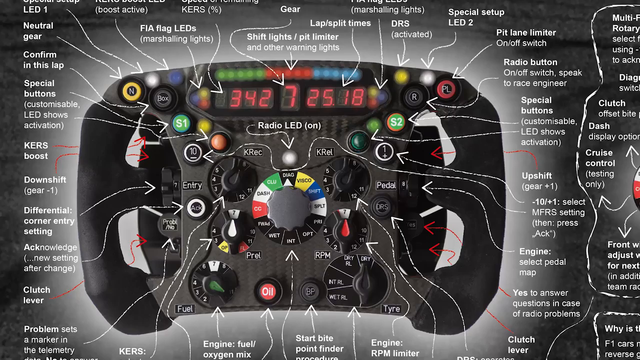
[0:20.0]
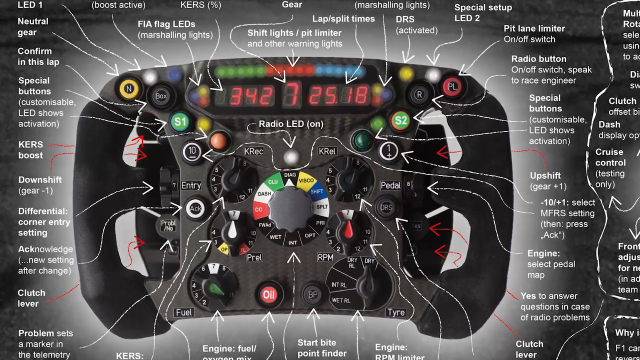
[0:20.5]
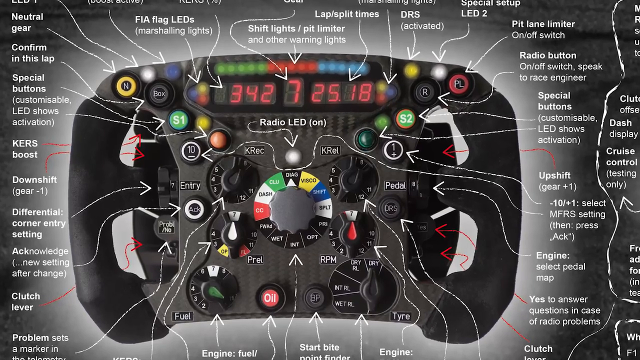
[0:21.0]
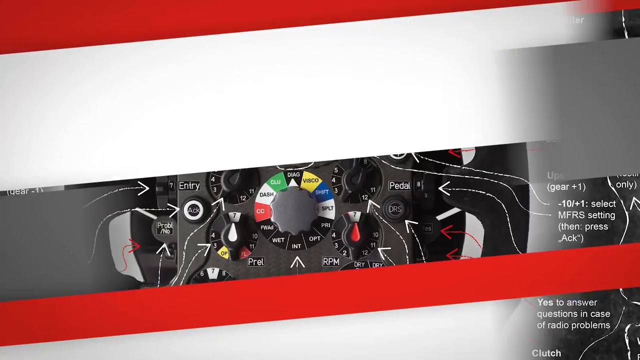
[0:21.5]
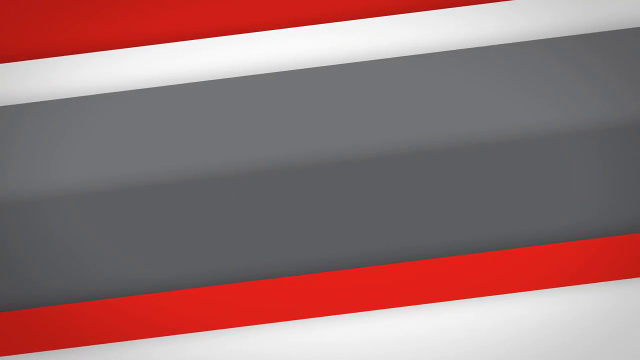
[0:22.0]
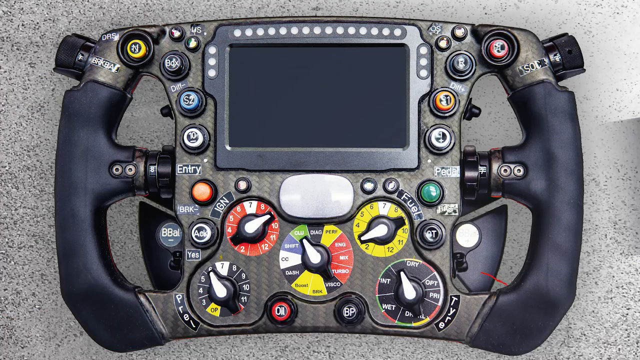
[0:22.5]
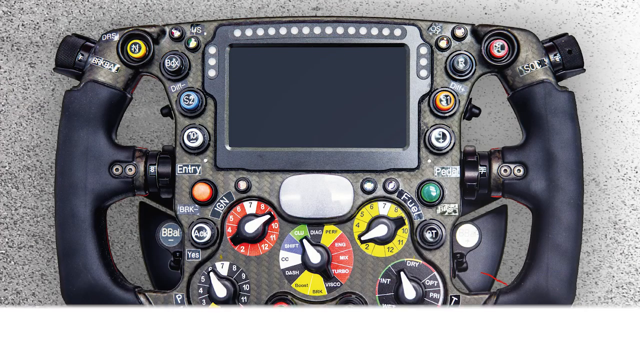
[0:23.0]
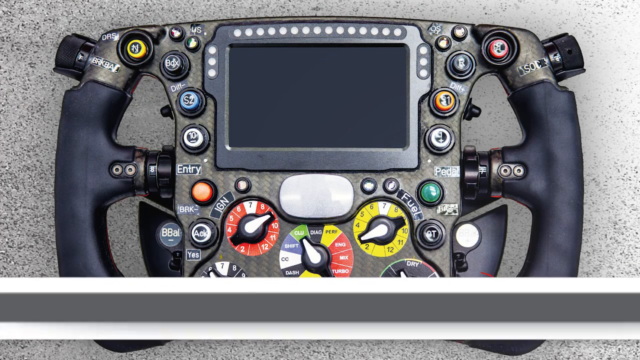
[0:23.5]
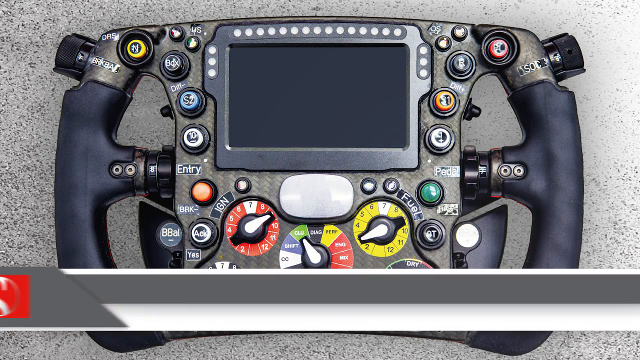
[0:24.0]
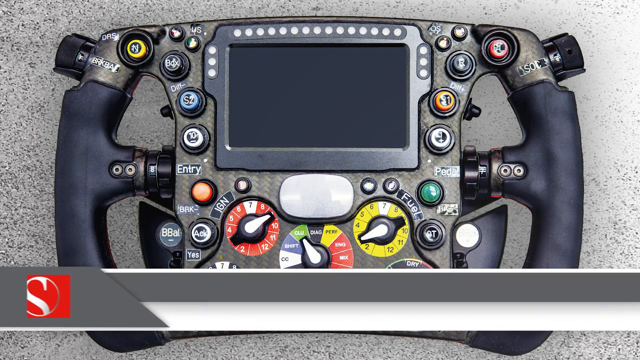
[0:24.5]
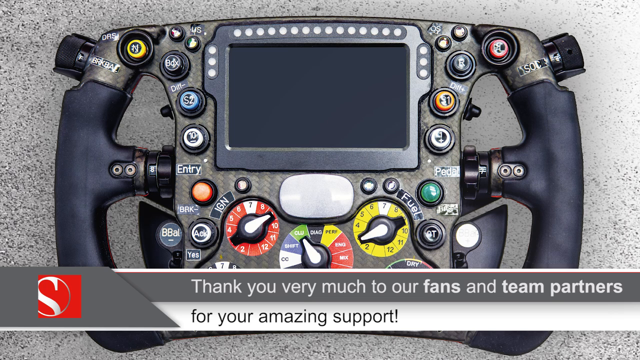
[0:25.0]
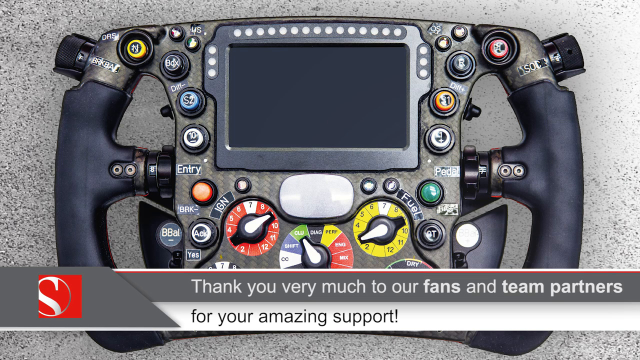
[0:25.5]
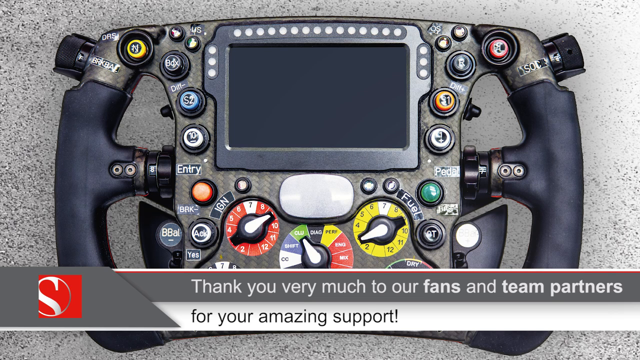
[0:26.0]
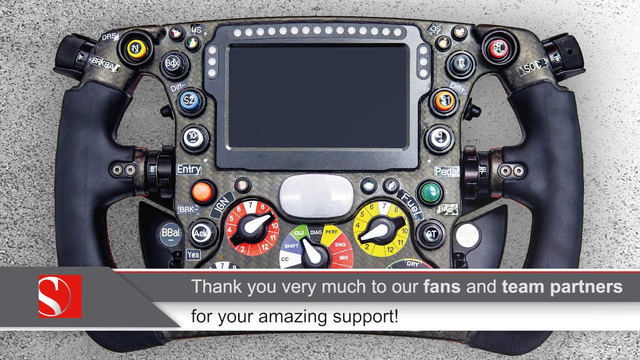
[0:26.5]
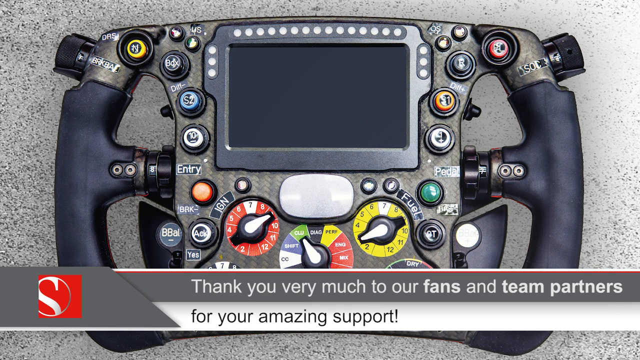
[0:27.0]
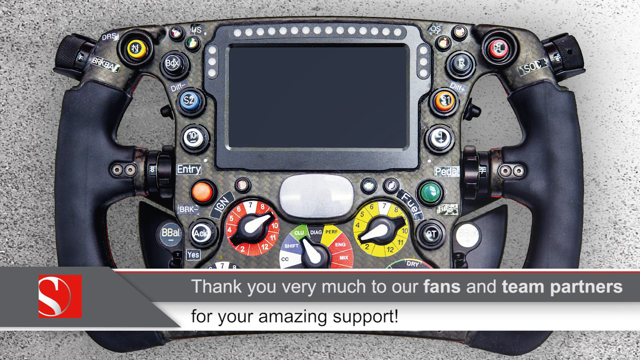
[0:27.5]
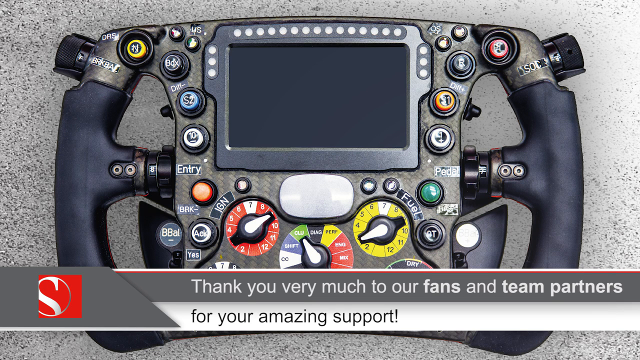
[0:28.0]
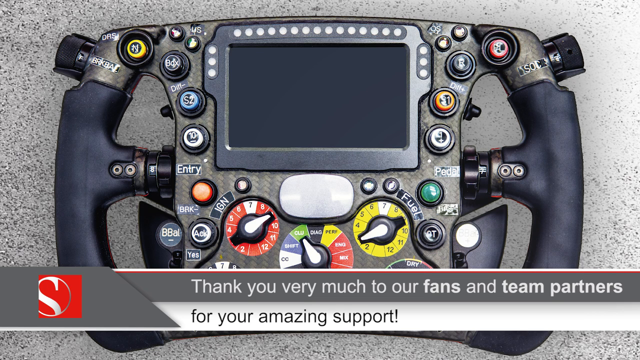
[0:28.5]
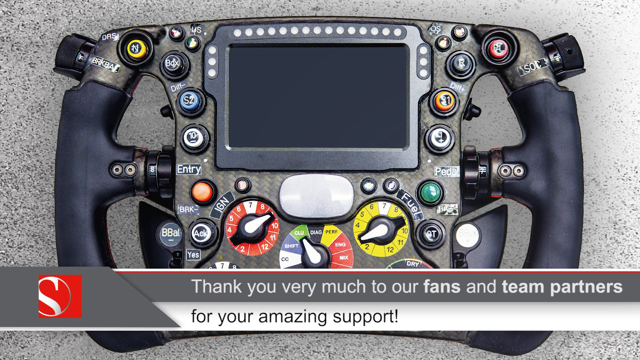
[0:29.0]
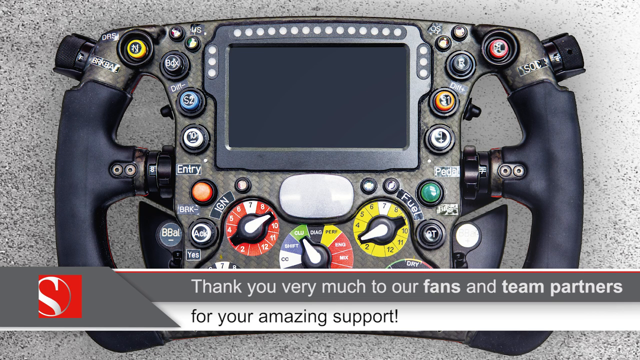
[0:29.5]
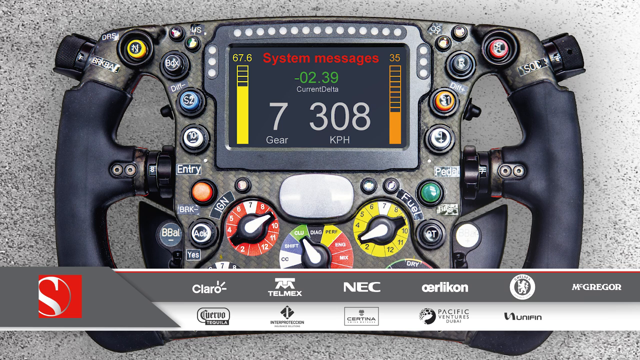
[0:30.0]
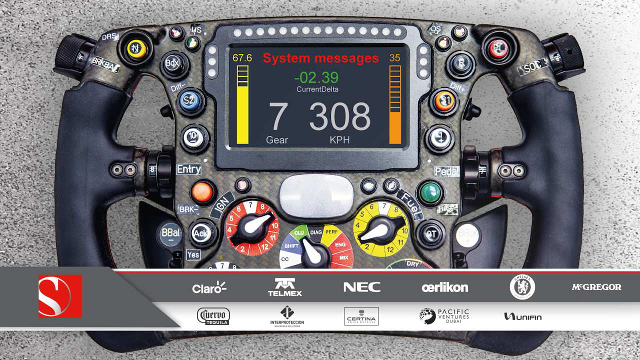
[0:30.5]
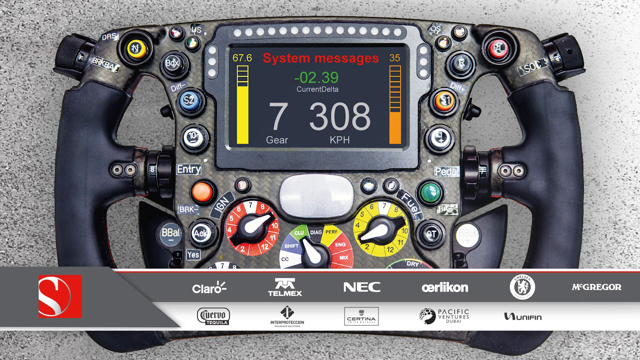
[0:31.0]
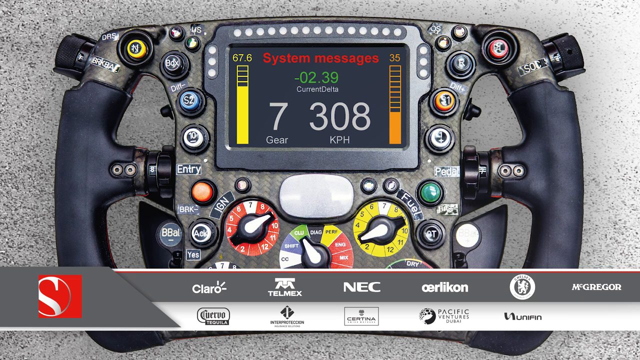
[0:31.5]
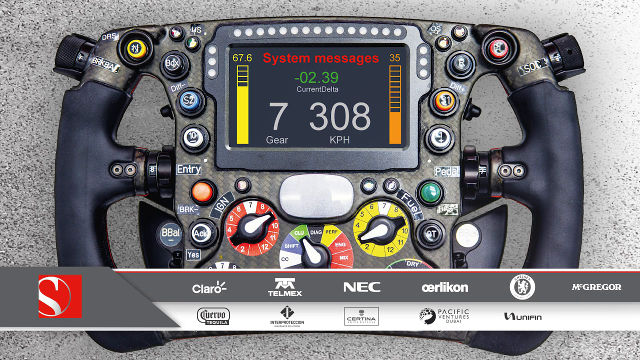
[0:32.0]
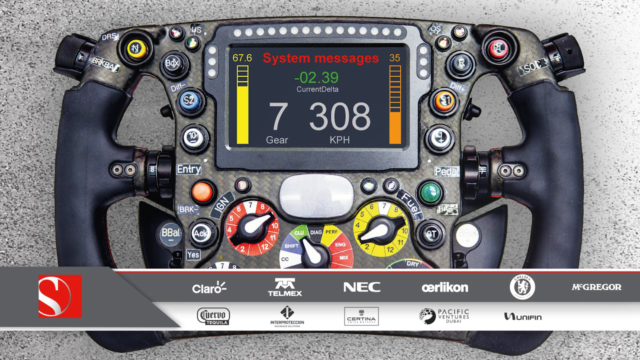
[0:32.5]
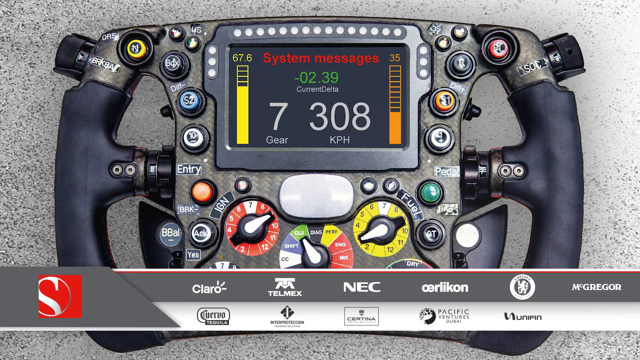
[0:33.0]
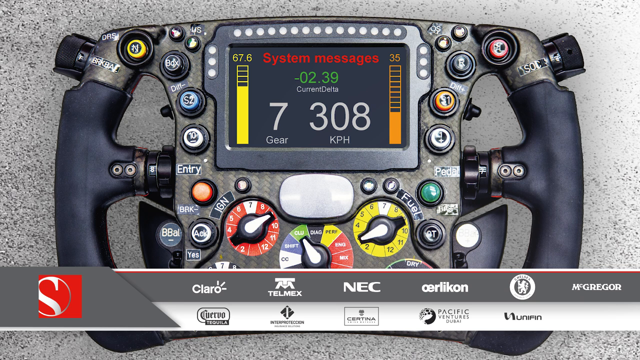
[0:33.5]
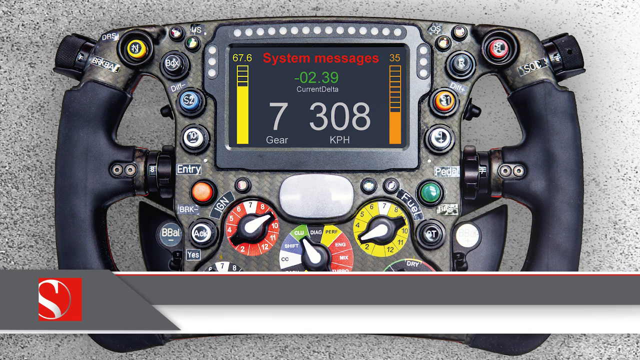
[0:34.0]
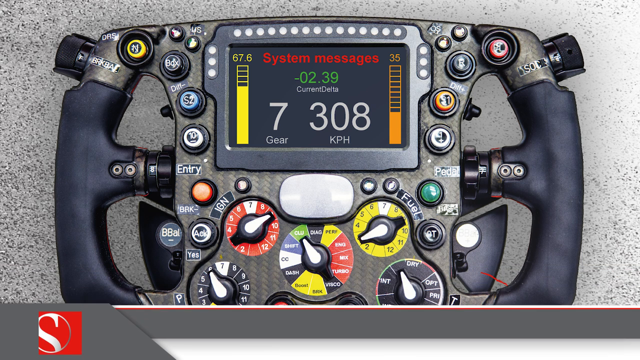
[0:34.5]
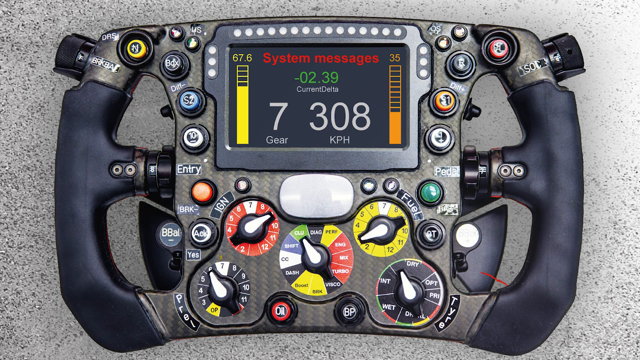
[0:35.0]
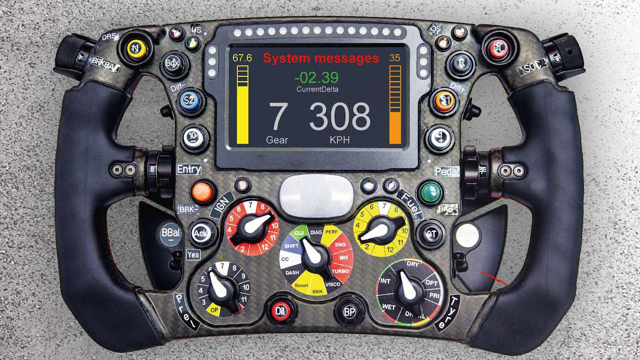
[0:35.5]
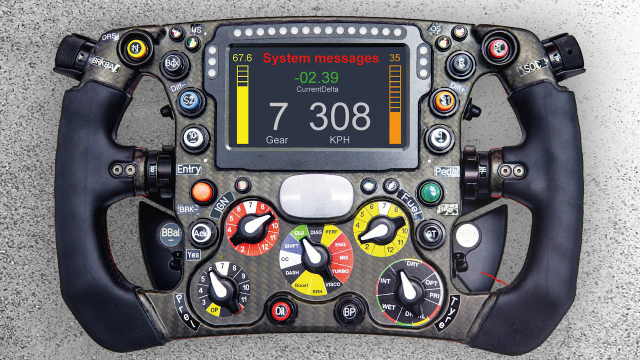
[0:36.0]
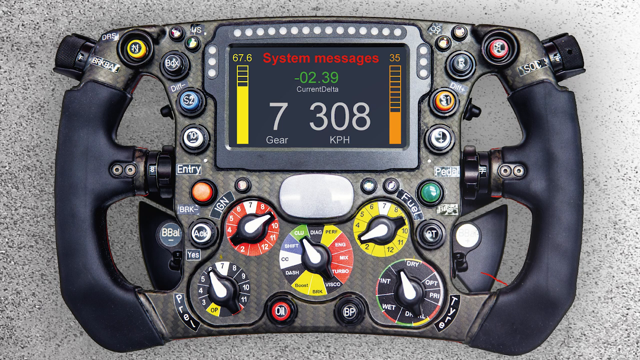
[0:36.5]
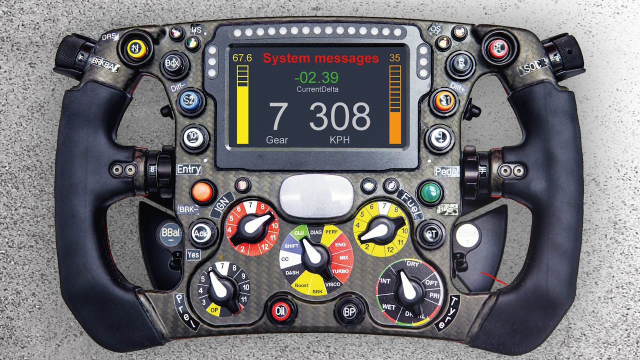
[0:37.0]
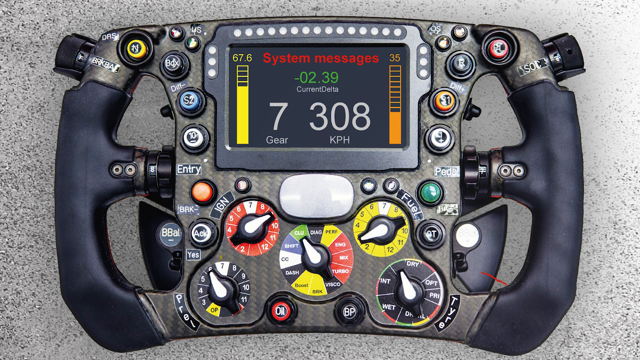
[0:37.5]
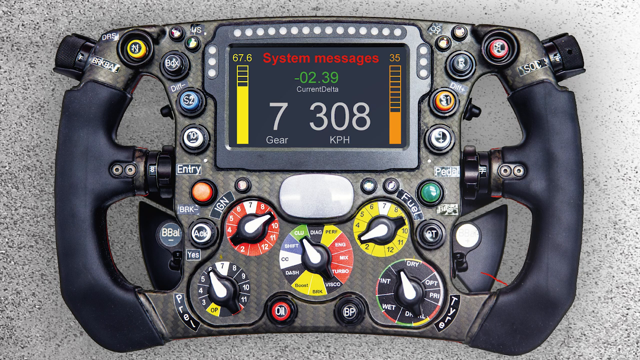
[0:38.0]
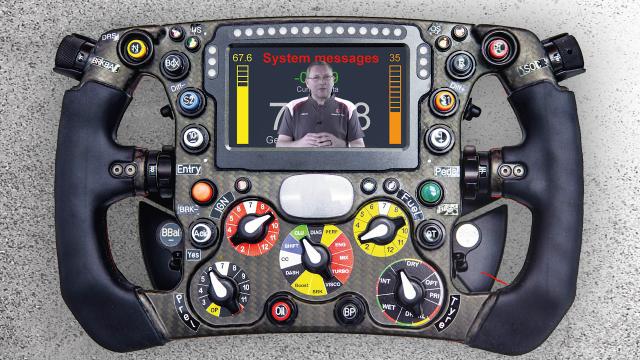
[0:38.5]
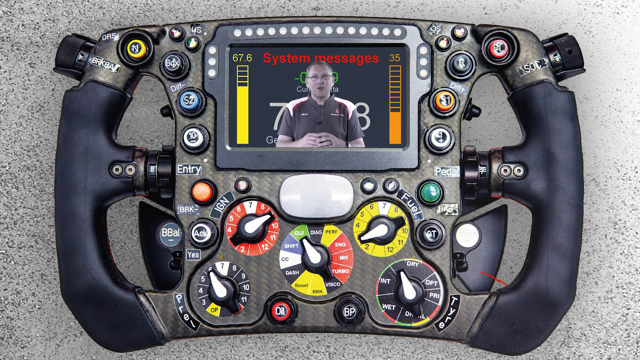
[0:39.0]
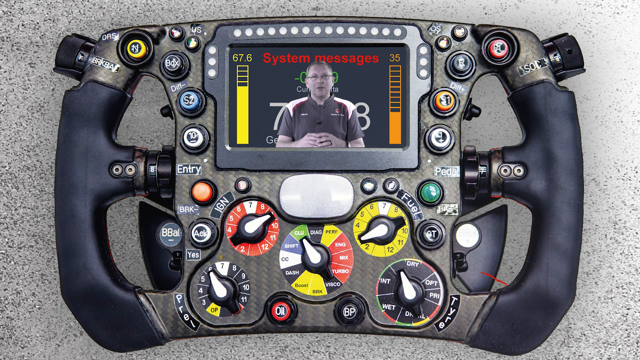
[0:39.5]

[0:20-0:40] A brochure for the handheld steering wheel shows many squiggly arrows pointing to parts of the controller, such as the neutral gear, the pit lane timer and the on/off switch, all in white font on a dark grey background. The controller is colorful, like a handheld video game steering wheel, with many toggles and green, yellow, blue, white and red buttons of all kinds. The image transitions as red lines go across the screen, and a close-up of the controller appears, resting on what may be dark or light carpet, or maybe concrete. A banner, somewhat like a breaking news banner, comes across reading "thank you very much to our fans and team partners for your amazing support". The controller's small screen then shows "system message" with a reading of negative zero two point three nine, and a man in a black t-shirt, with white skin, pops up on it and points upward and outward with both hands.